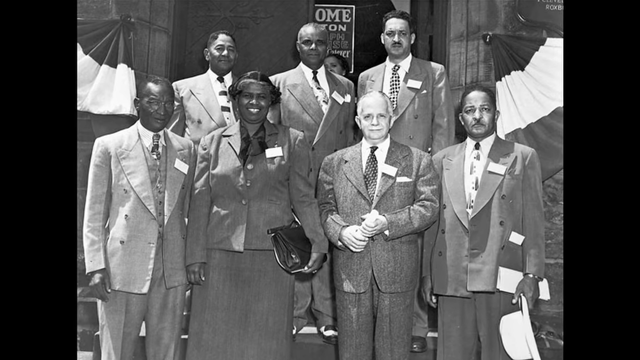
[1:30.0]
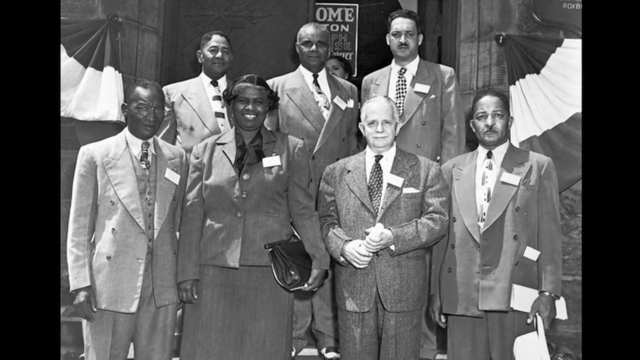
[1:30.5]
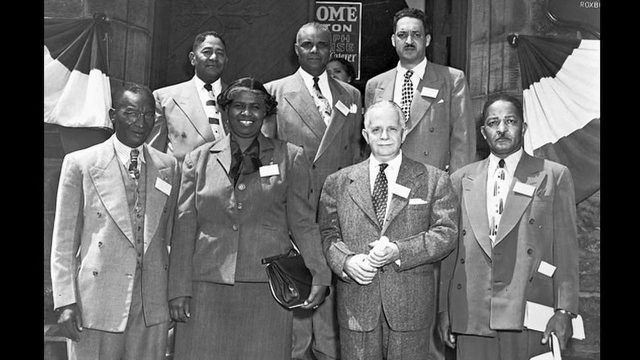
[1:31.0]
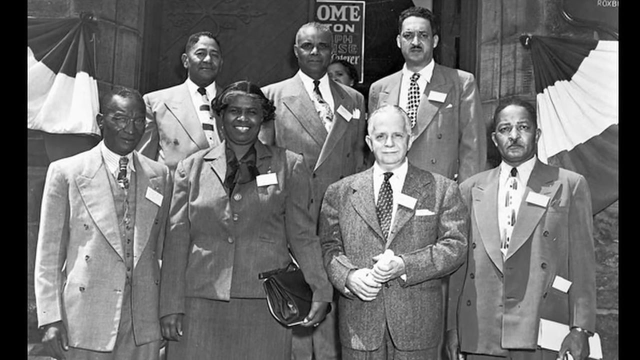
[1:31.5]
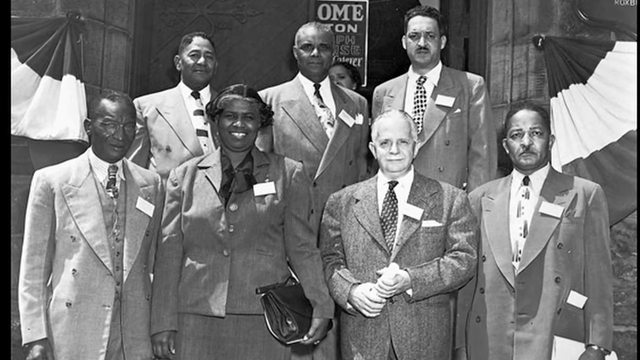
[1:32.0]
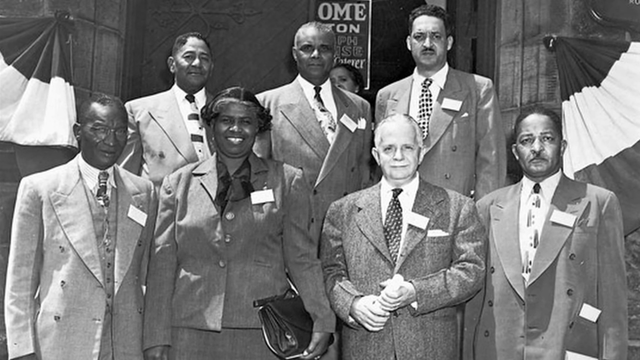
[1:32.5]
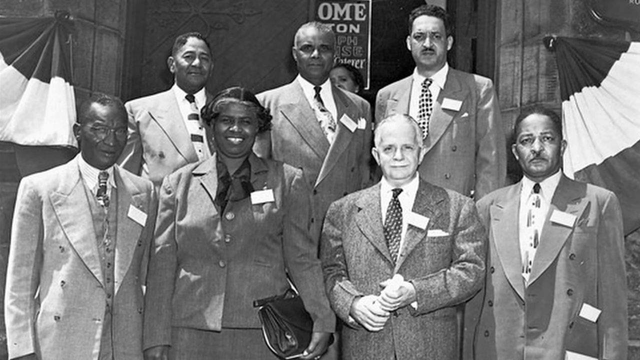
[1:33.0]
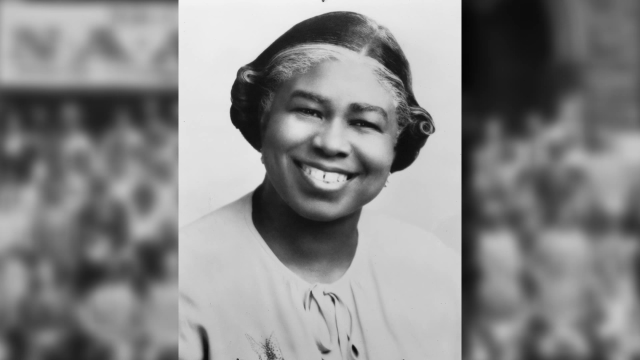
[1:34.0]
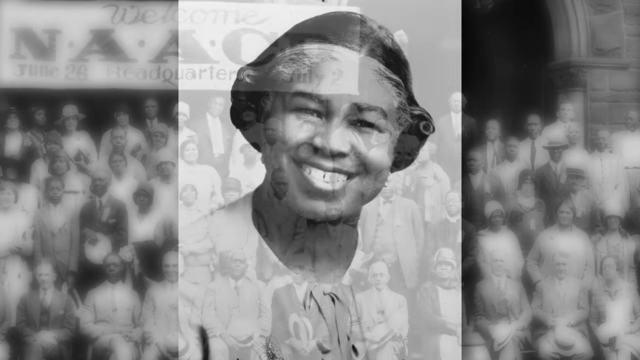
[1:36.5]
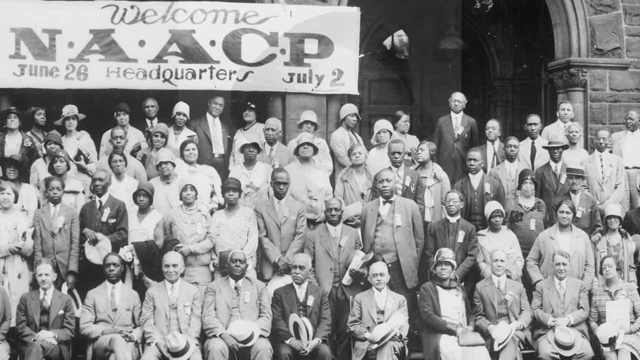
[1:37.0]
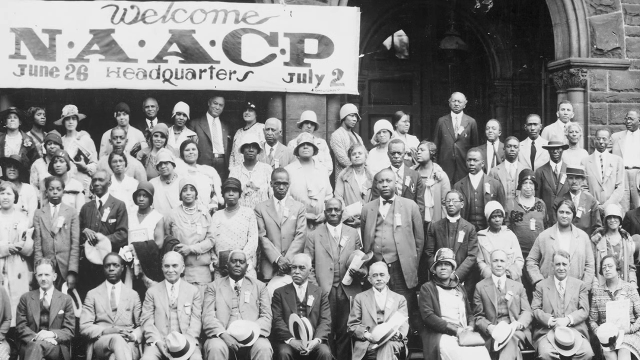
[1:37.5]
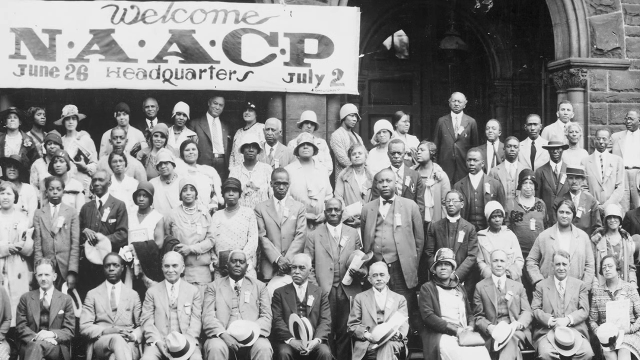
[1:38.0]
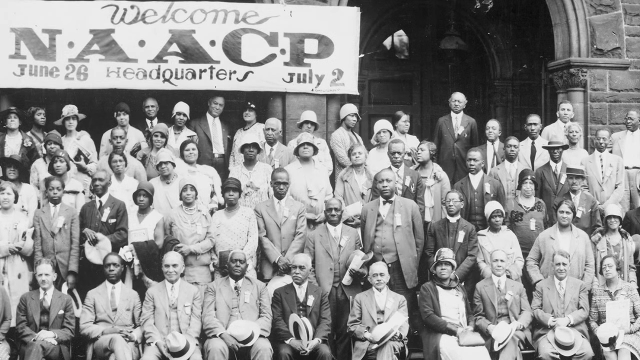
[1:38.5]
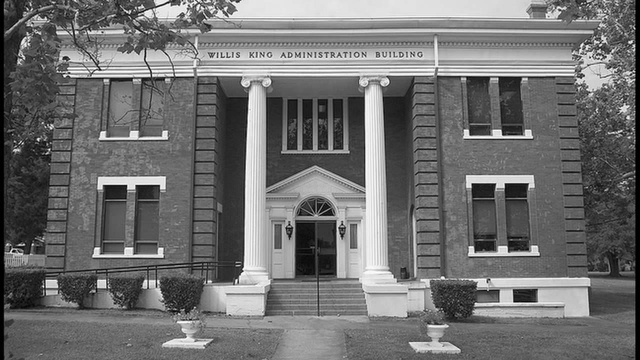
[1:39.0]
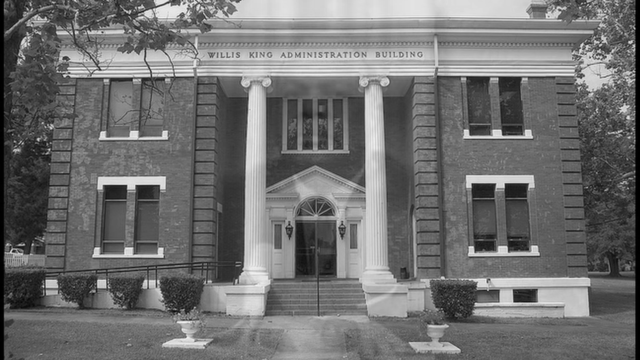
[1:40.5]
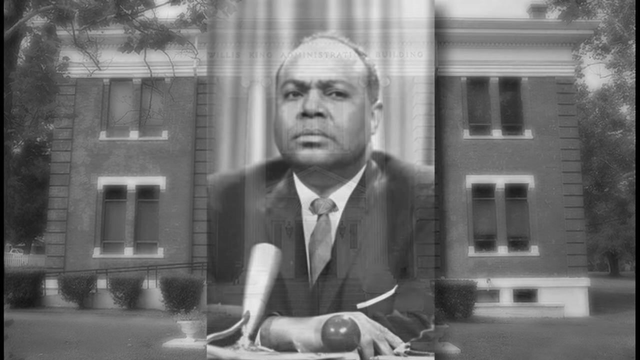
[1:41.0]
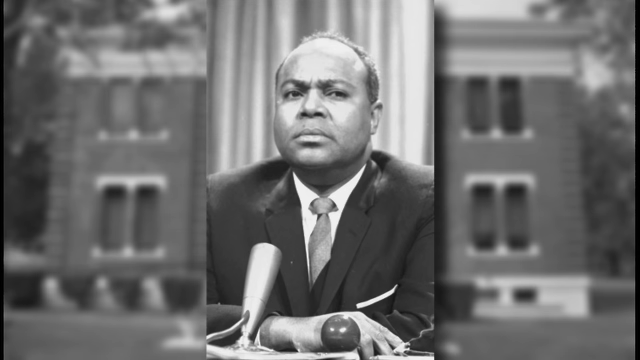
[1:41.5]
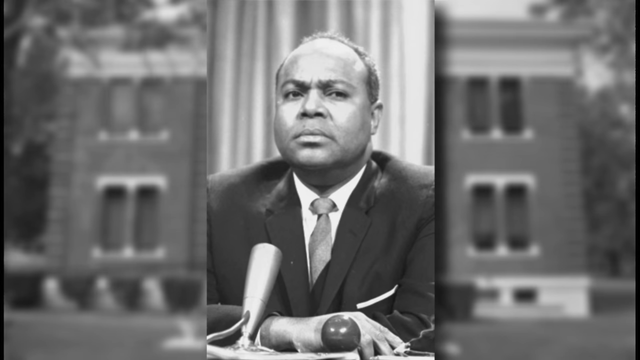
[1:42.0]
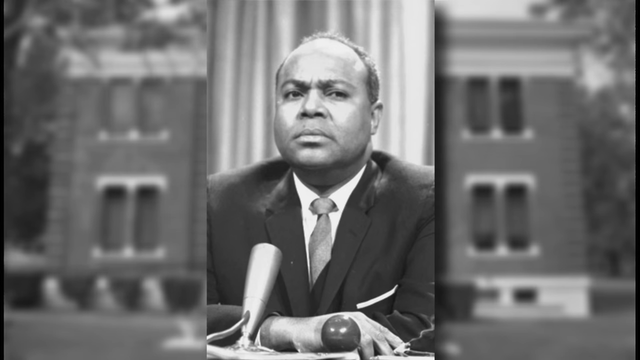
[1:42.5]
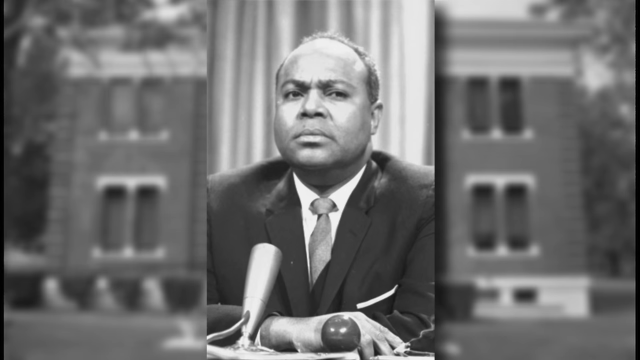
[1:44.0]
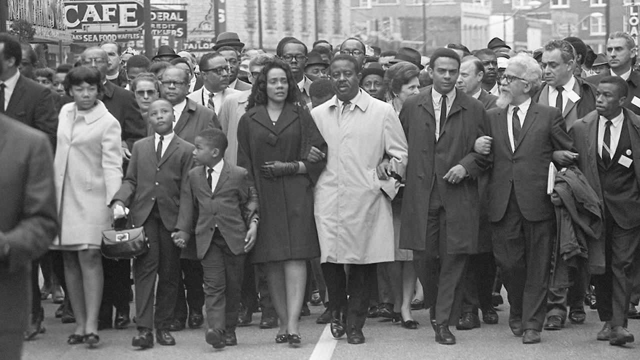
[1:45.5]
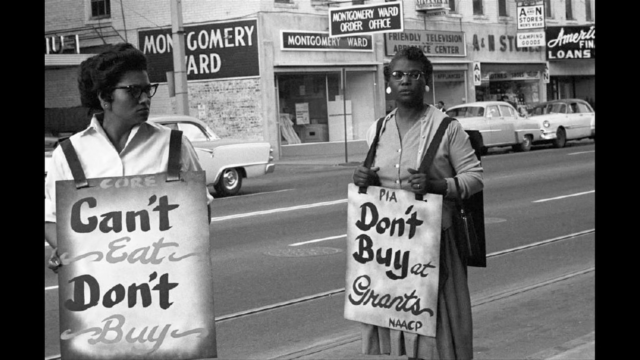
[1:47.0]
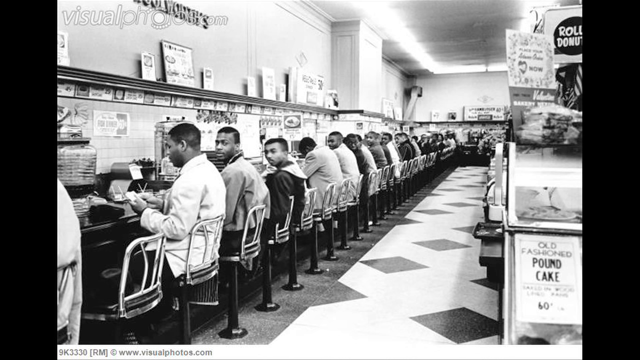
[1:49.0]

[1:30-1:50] A black-and-white picture shows Black and white people, all dressed in suits. A picture of a smiling African American woman, whose identity is unclear, follows, along with text including "welcome", "June 26" and "headquarters"; the group seems to be an African American coalition, with a couple of Caucasian people as well. Text reads "Willis Key Administration building" over a huge building, and an African American man is shown, possibly Willie King. A crowd of mostly African American people, including women and kids, with some Caucasian people, walks down the street holding hands with arms interlocked, possibly a protest or march.